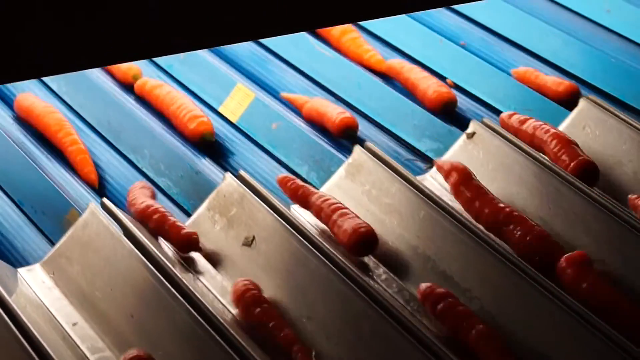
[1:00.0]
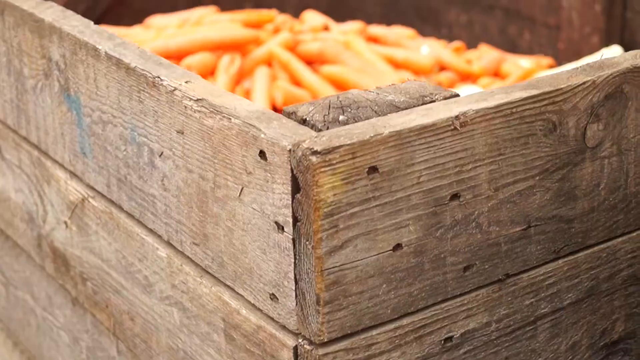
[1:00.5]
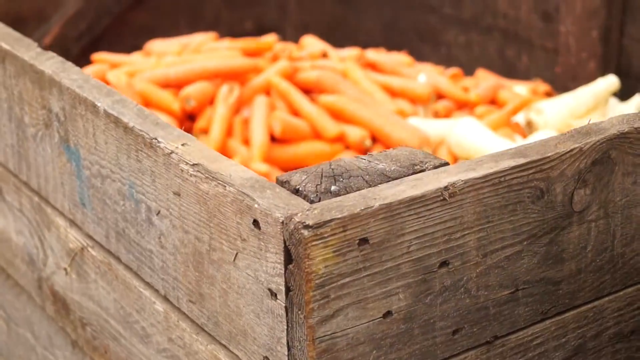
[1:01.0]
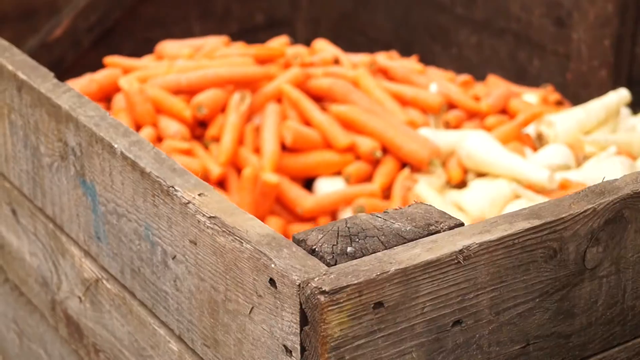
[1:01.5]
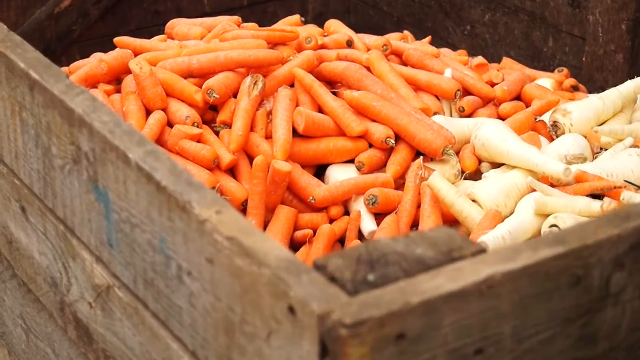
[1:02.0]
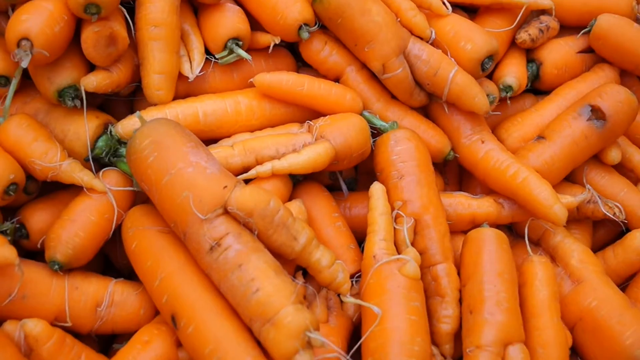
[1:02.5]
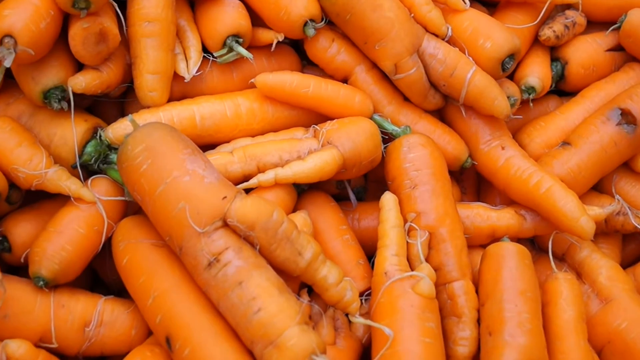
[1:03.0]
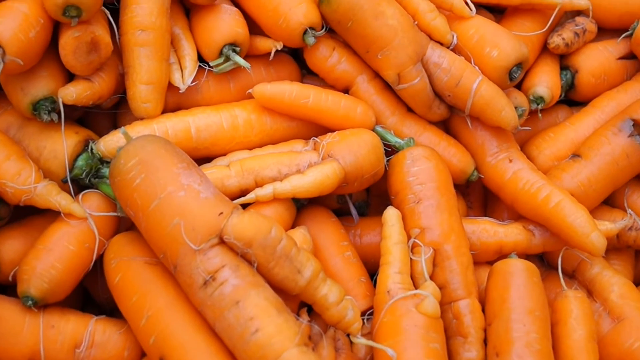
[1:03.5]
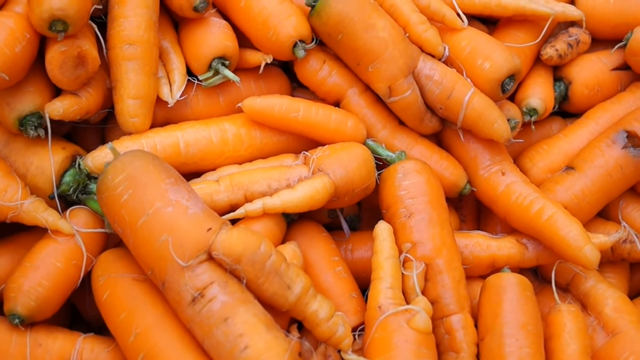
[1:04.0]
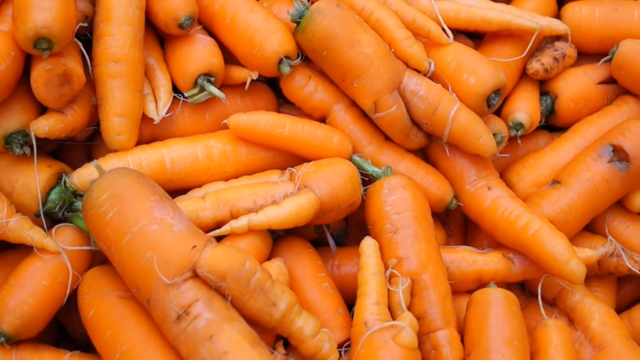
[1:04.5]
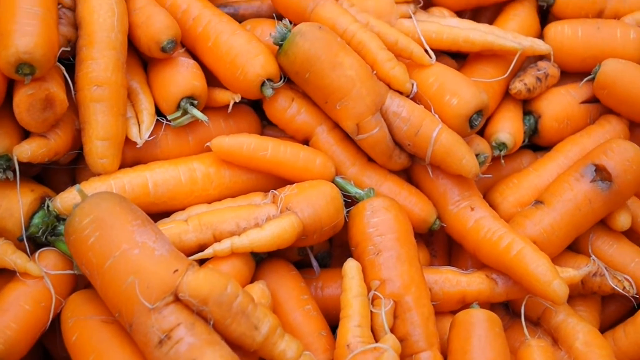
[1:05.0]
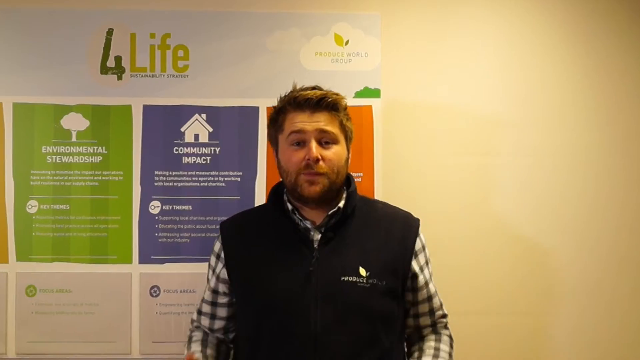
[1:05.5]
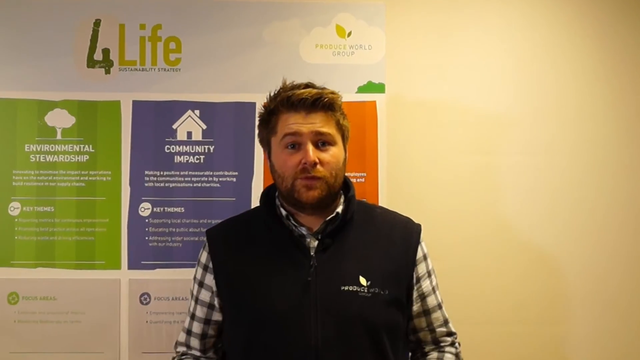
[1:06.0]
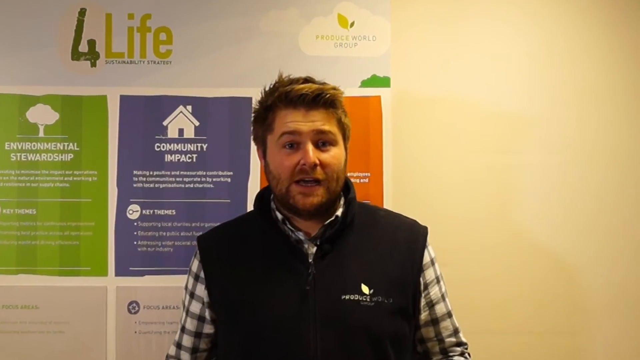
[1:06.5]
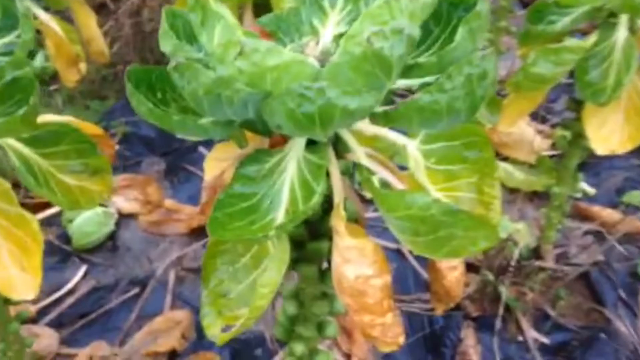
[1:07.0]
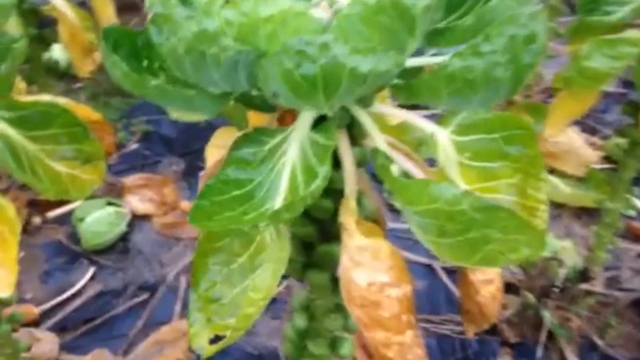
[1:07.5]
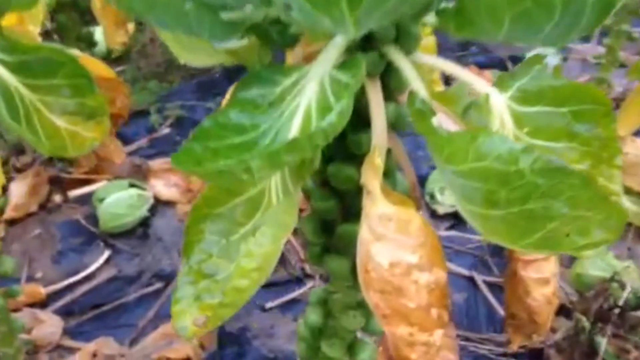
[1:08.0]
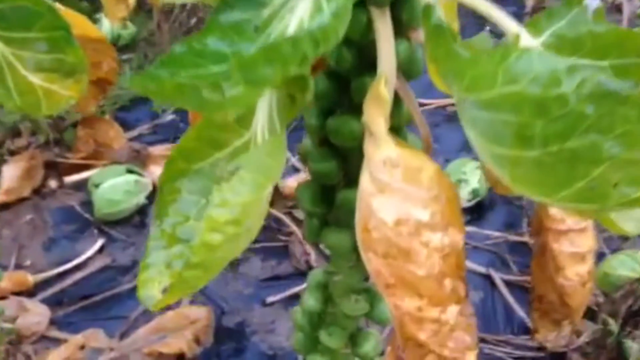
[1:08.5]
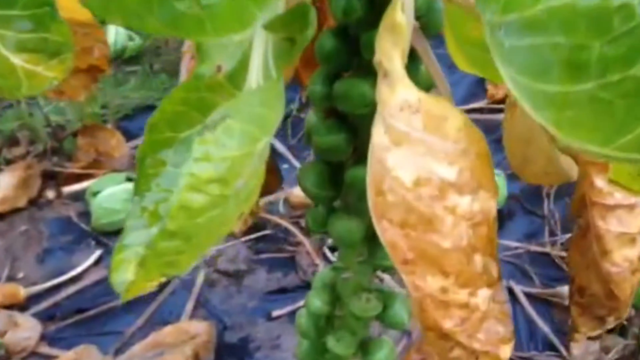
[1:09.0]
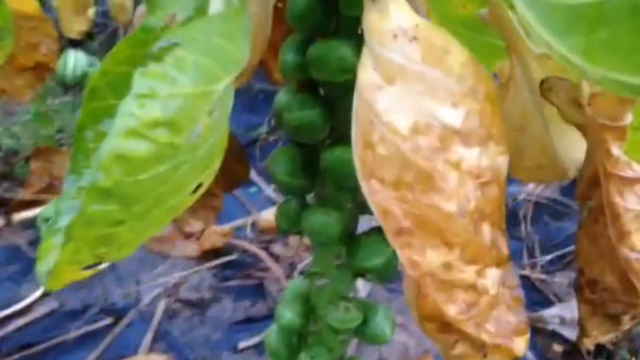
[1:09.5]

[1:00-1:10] The washed carrots move along the corrugated slide, and the view pans to them being loaded into a wooden crate that also holds some parsnips. A zoomed-in shot shows the different shapes and sizes of the carrots. The view pans back to Guy Thallon talking to the camera, with the four life strategy behind him; the green rectangle, the blue rectangle and some of the orange rectangle are visible. The camera then pans to a plant on a leafy green stem with little green bulbs on the bottom, which looks like brussels sprouts or tomatoes.